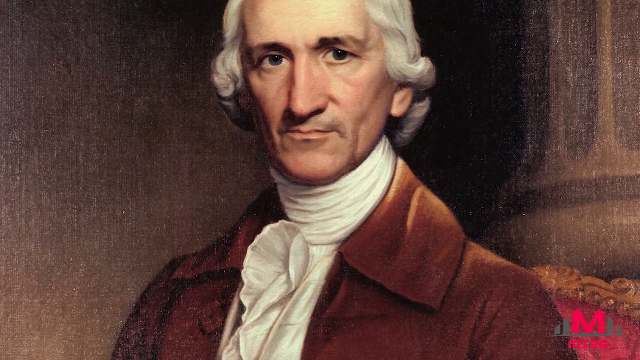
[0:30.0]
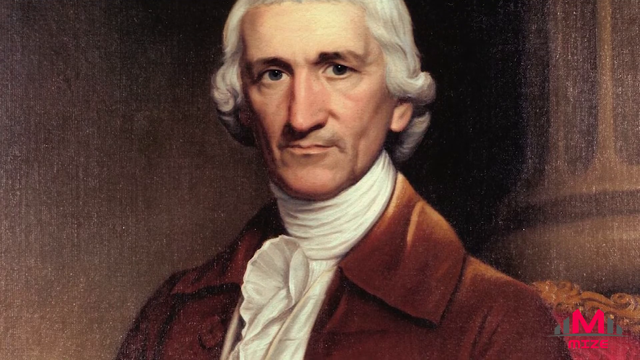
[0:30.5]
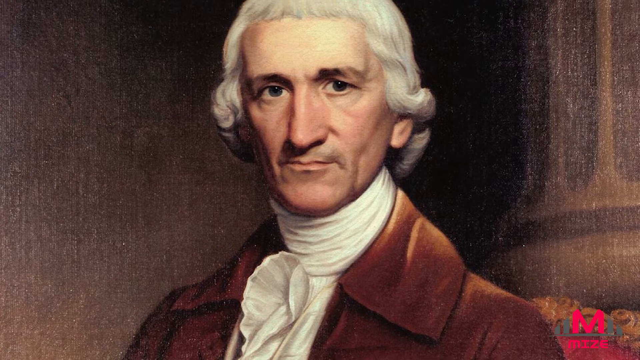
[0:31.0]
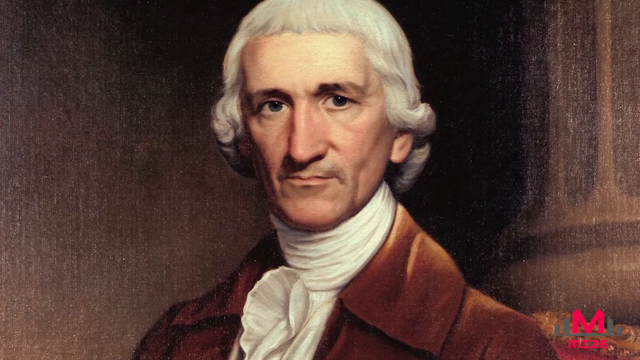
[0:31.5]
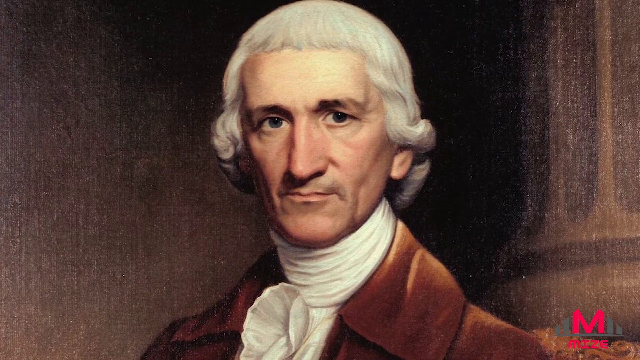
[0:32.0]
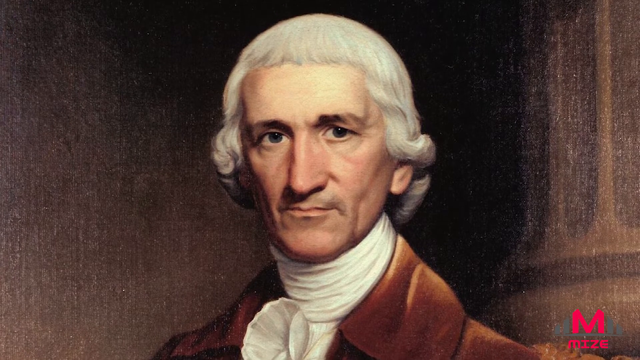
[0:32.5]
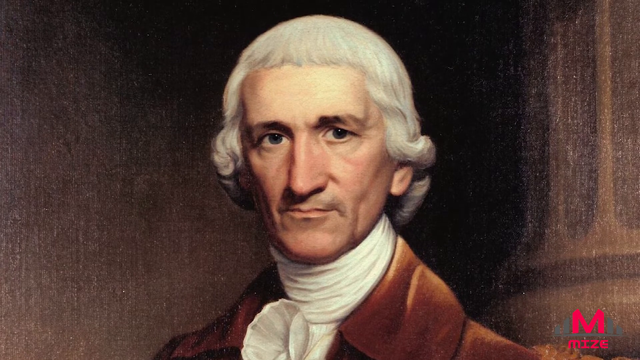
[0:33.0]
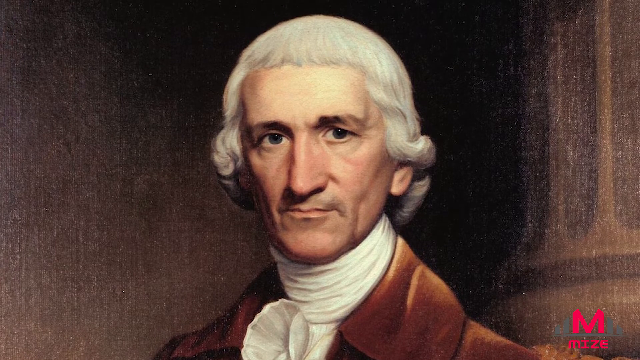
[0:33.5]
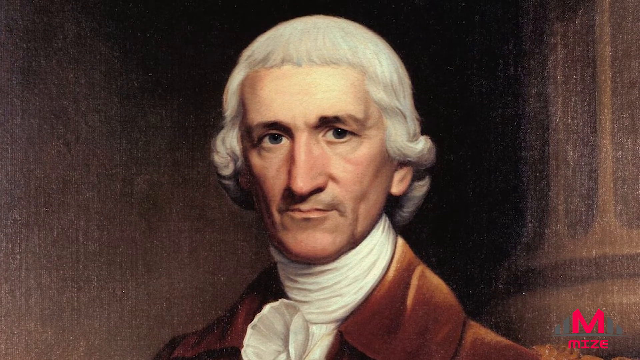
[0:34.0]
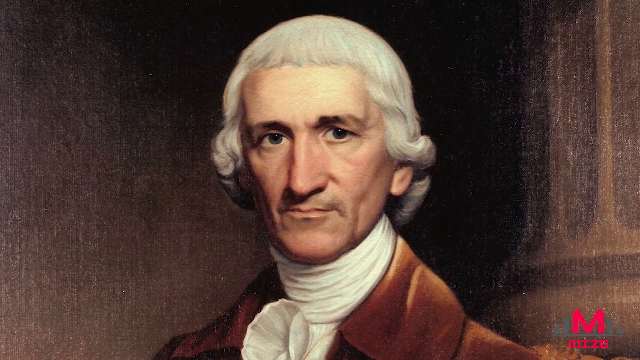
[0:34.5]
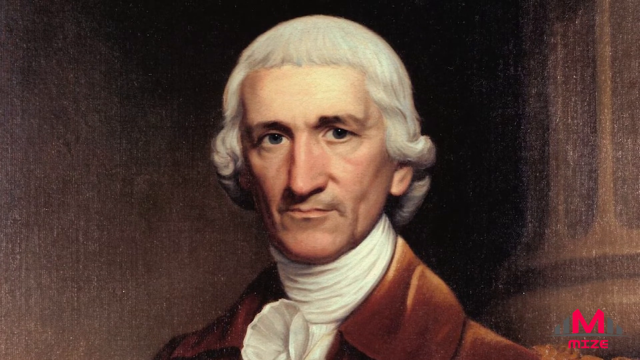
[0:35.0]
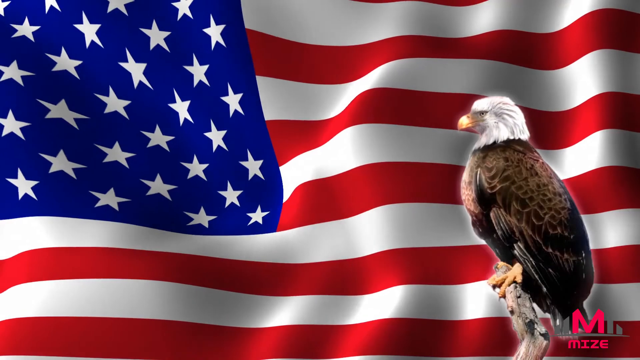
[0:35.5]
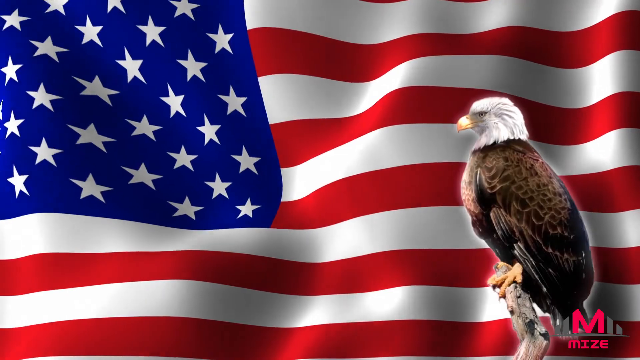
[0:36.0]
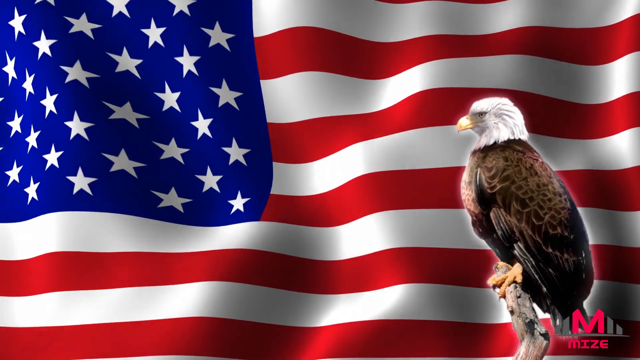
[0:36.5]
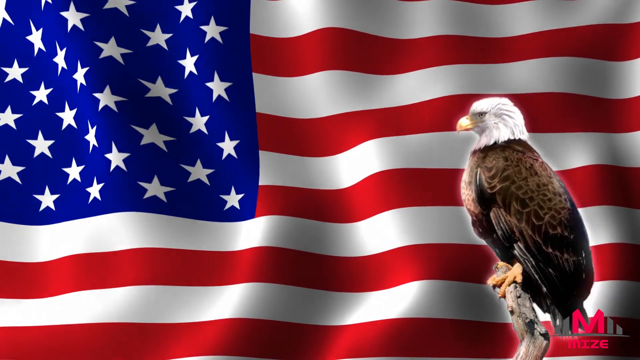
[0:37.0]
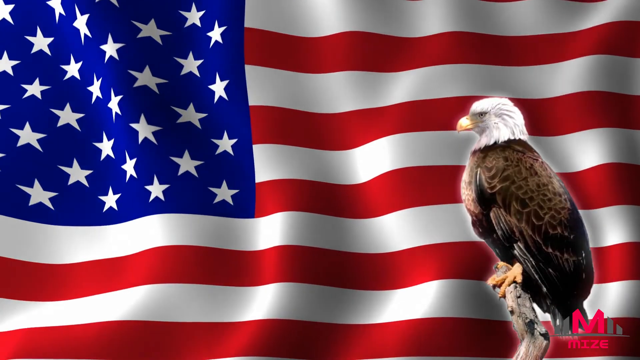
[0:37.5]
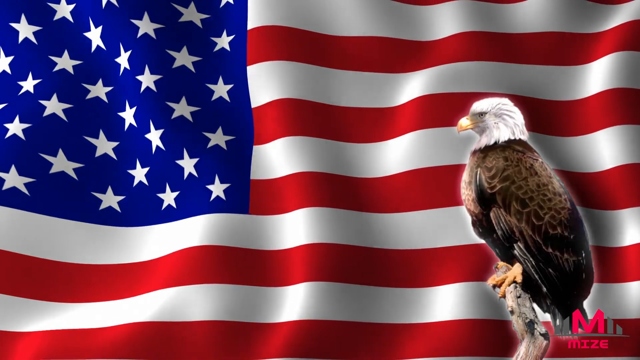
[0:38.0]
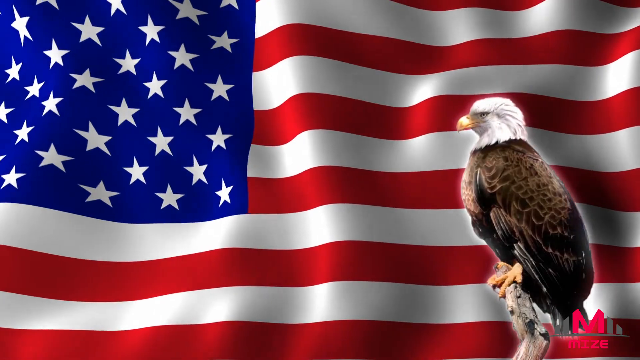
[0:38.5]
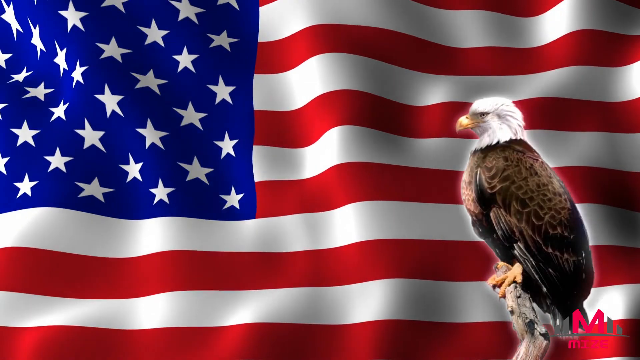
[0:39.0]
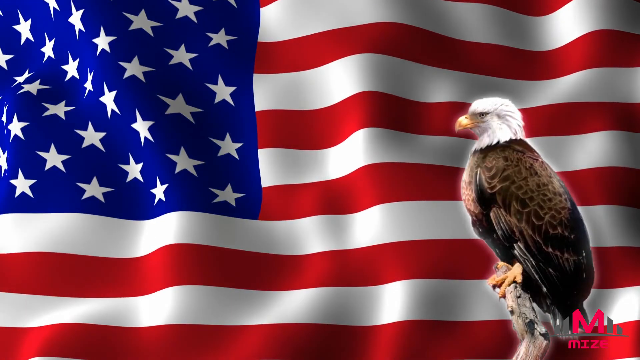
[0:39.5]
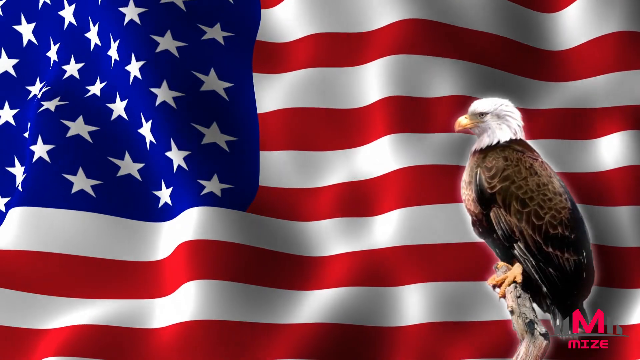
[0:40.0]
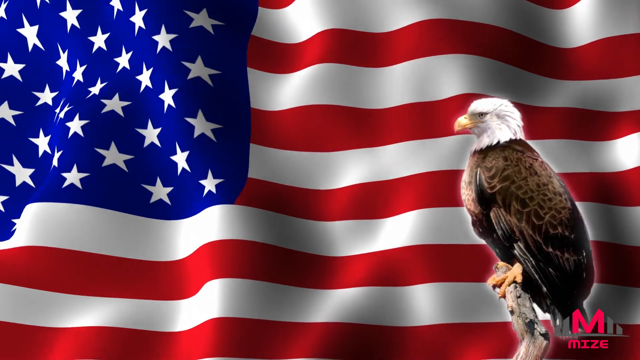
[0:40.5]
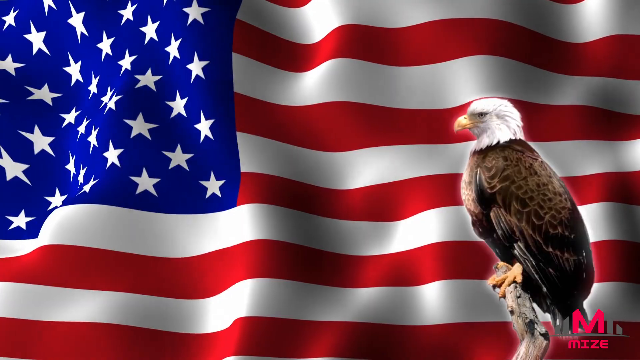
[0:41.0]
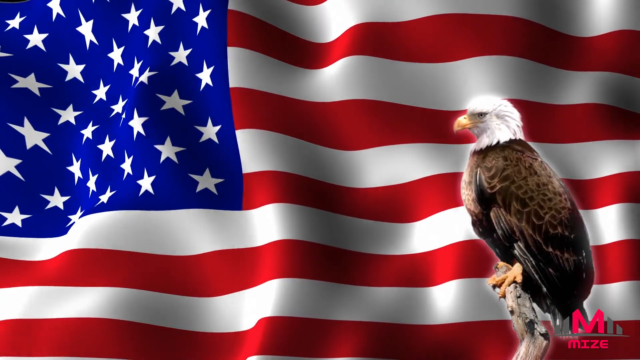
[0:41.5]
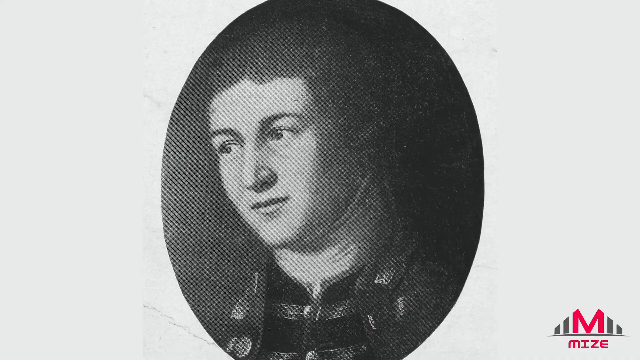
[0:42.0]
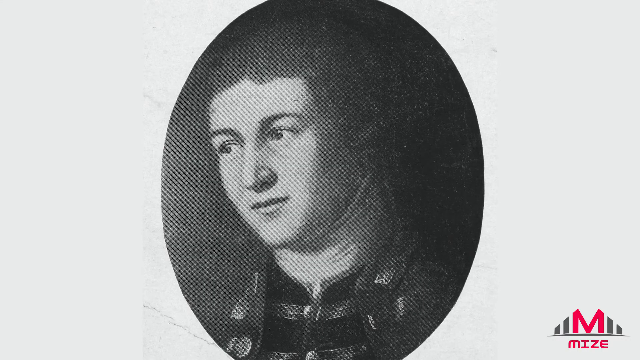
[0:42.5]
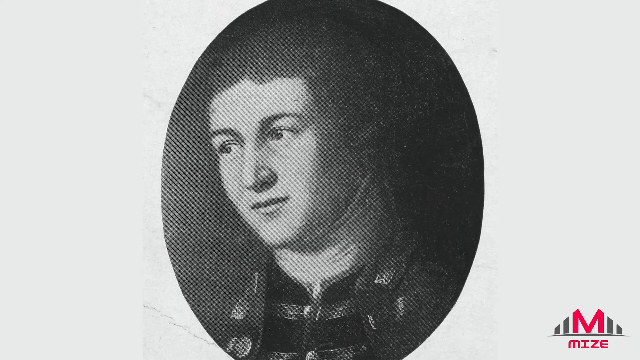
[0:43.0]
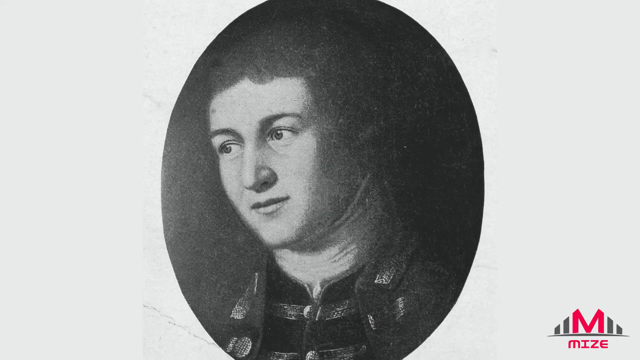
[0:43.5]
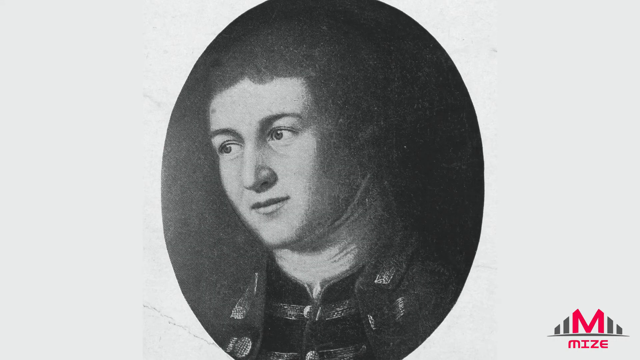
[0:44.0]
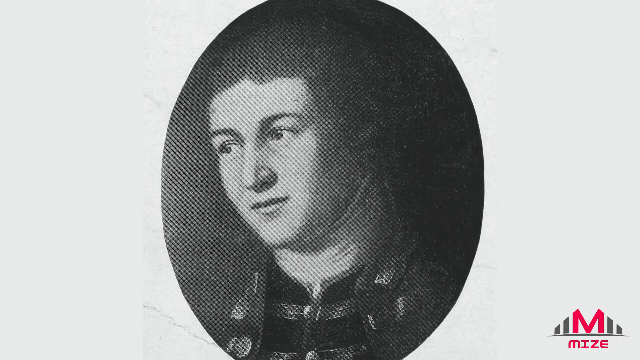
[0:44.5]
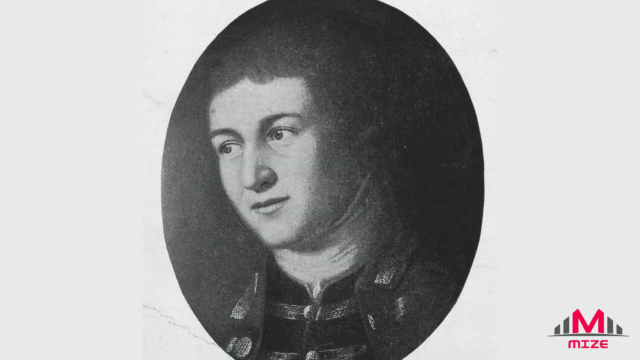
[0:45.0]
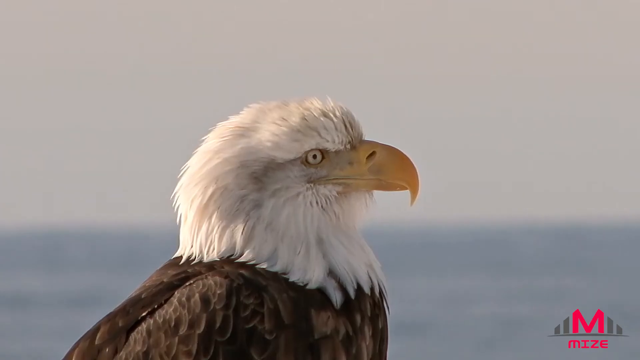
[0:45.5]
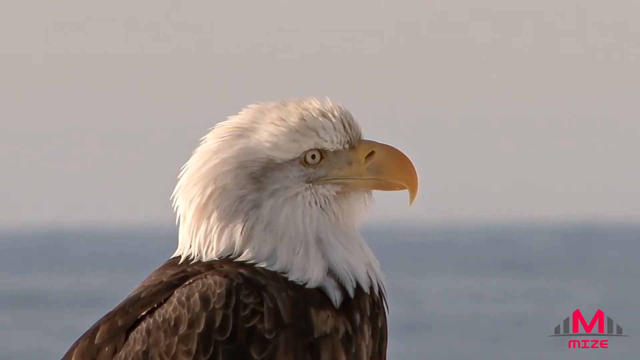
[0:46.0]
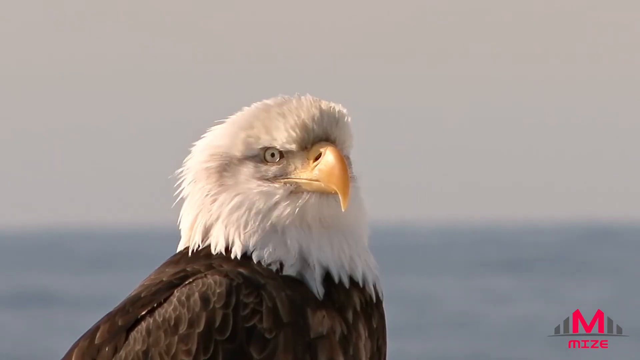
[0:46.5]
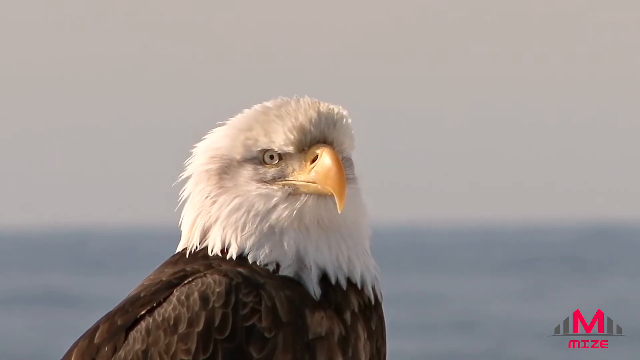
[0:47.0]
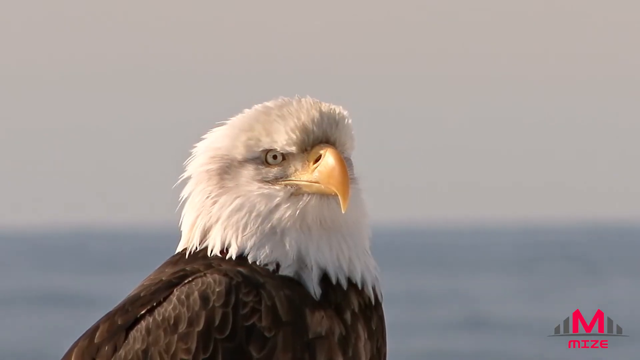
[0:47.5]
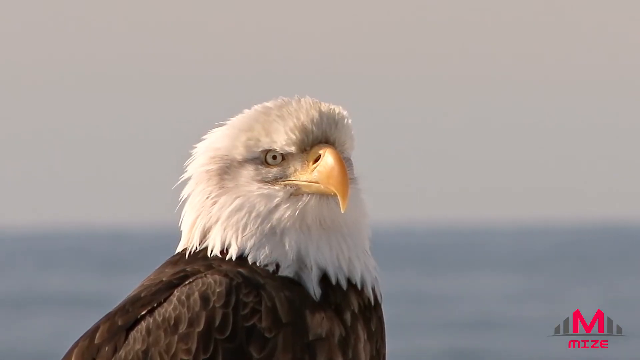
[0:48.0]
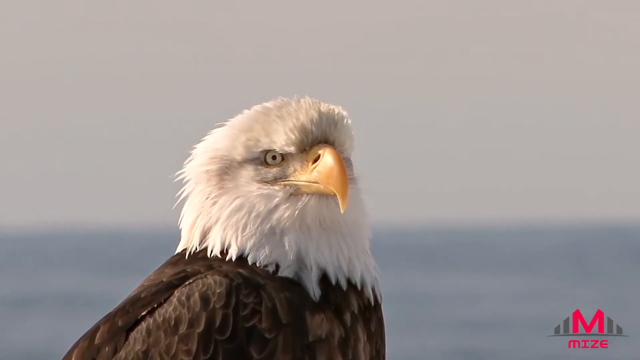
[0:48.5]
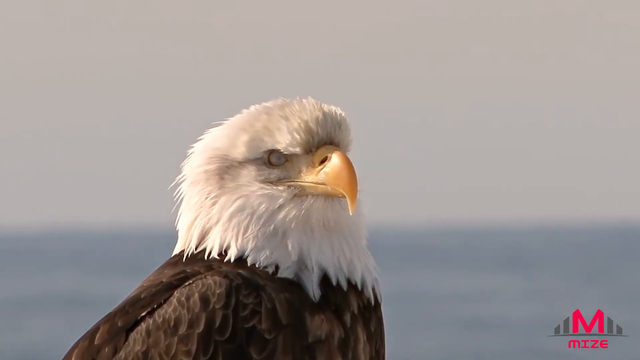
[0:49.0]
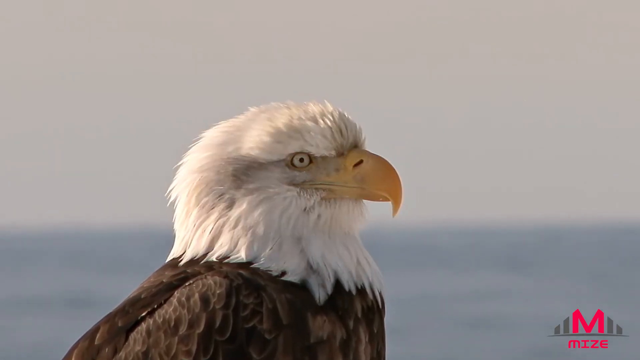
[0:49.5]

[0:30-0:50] The eagle appears with the flag of the United States of America. Next come pictures of women, and then the eagle, the national bird of America, is shown again.